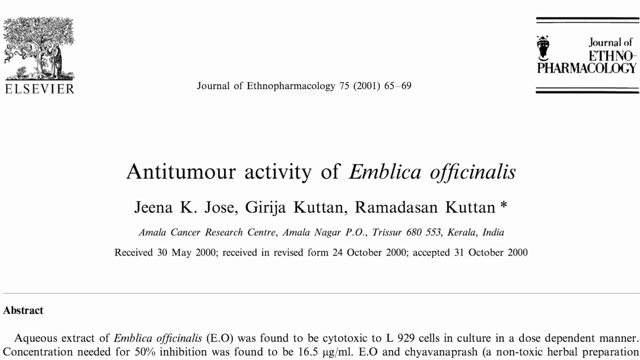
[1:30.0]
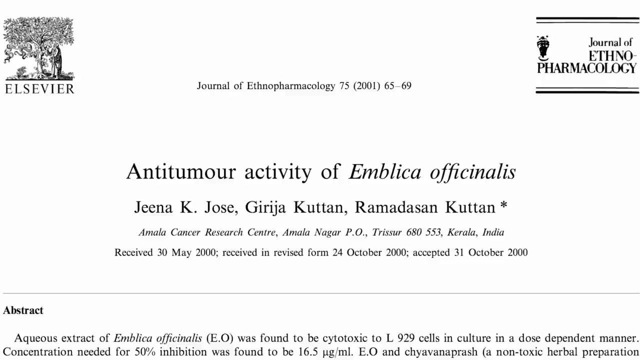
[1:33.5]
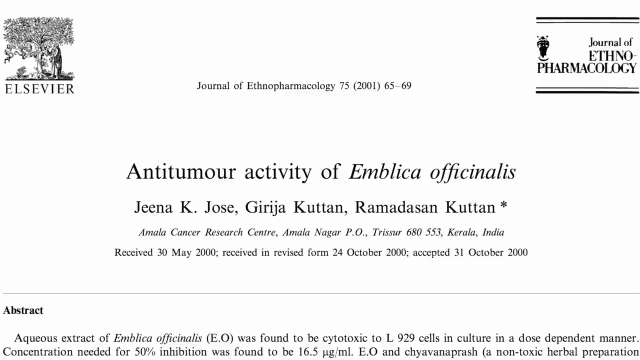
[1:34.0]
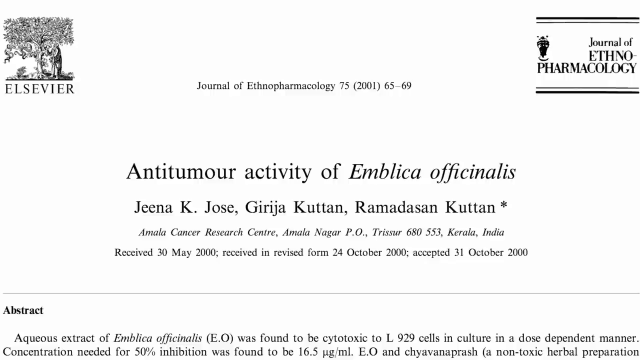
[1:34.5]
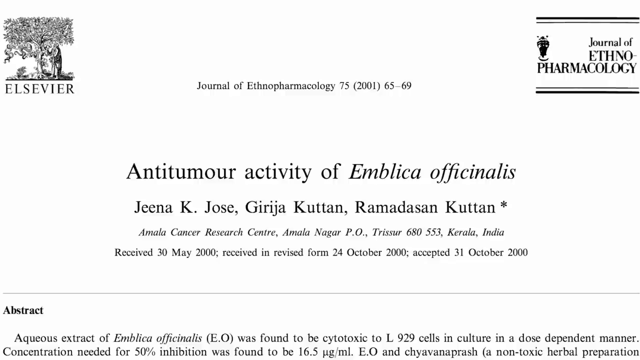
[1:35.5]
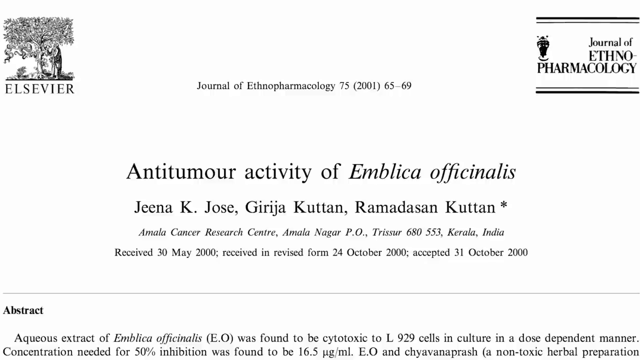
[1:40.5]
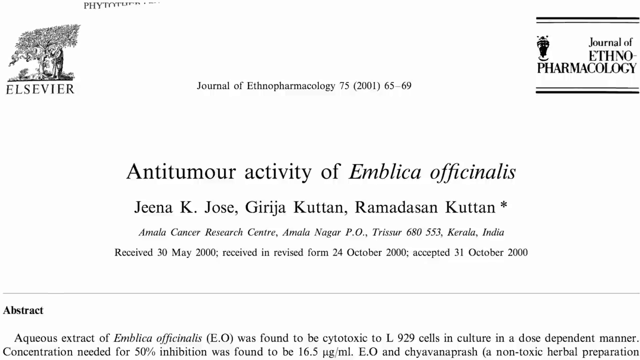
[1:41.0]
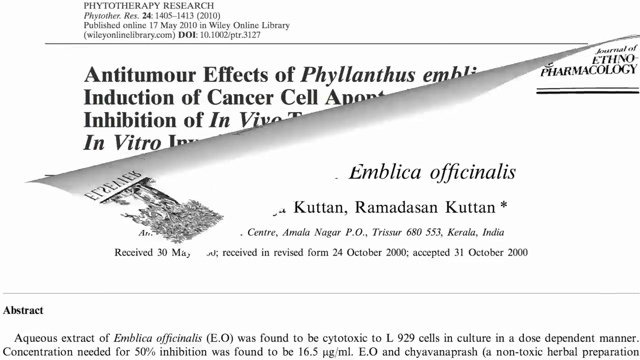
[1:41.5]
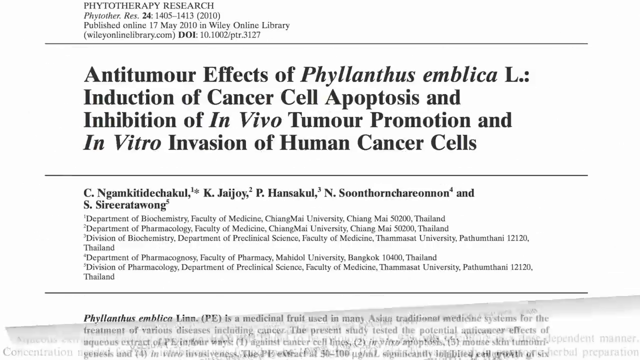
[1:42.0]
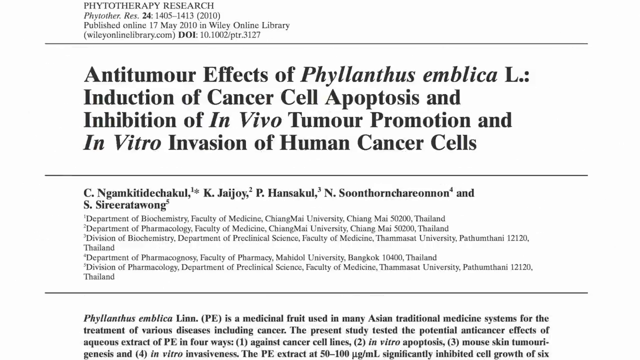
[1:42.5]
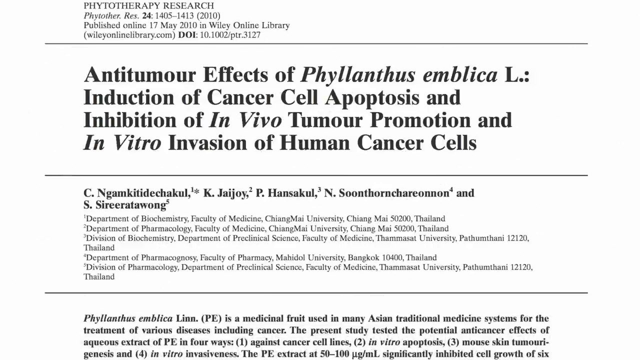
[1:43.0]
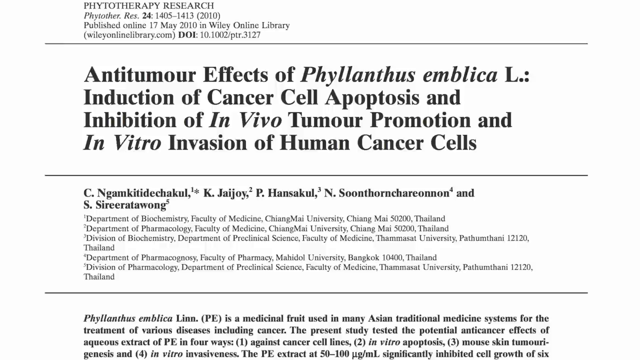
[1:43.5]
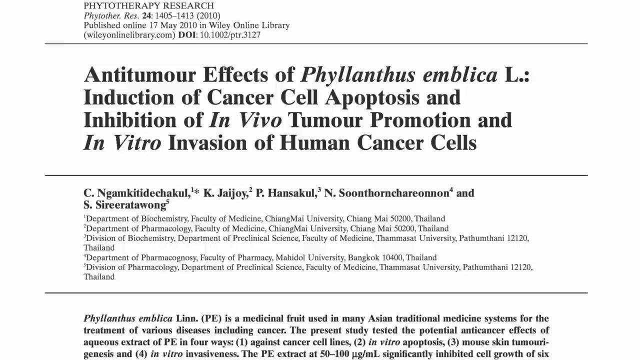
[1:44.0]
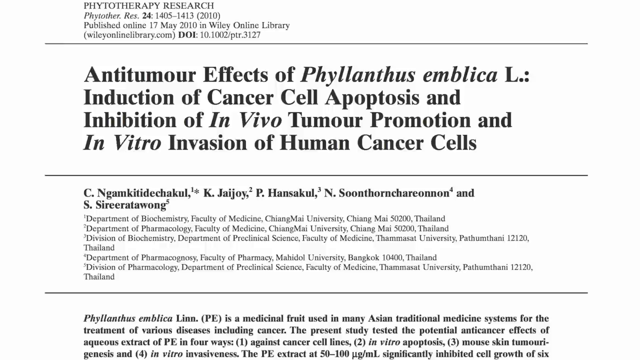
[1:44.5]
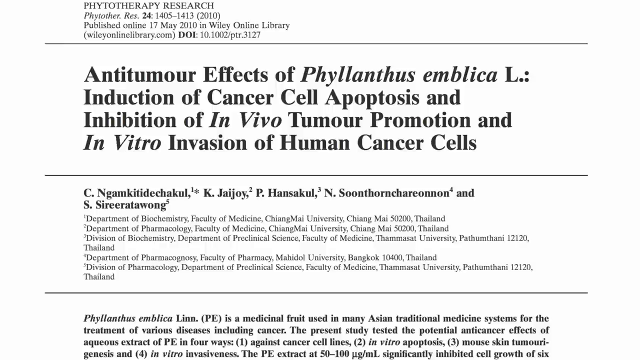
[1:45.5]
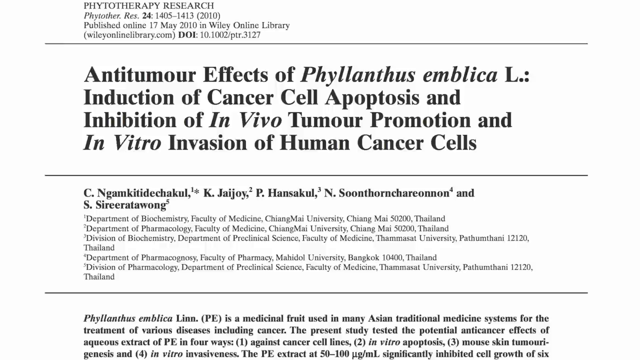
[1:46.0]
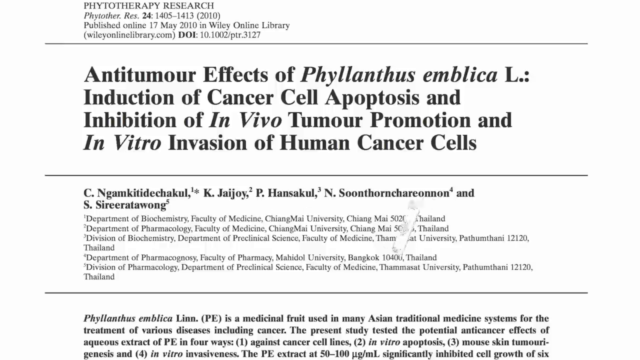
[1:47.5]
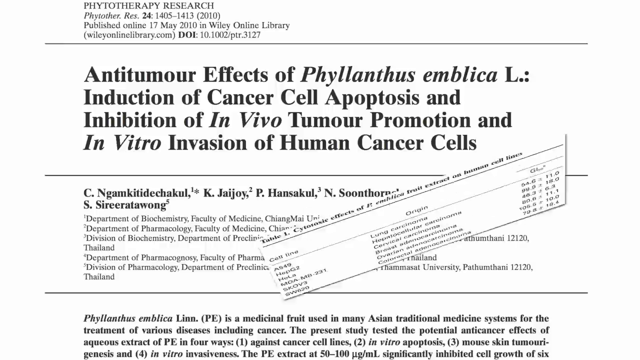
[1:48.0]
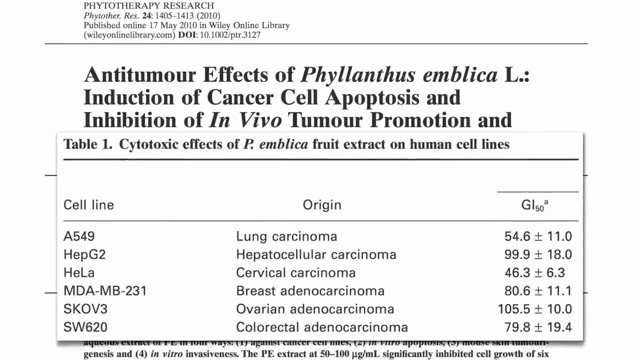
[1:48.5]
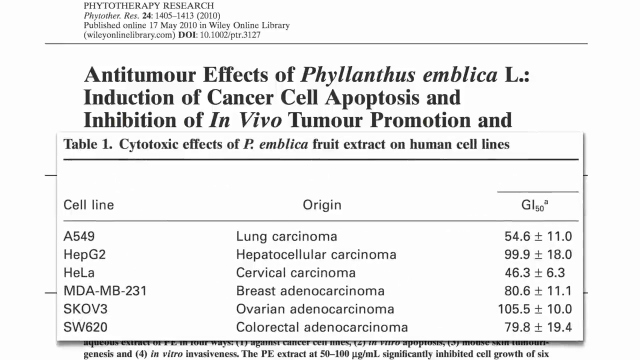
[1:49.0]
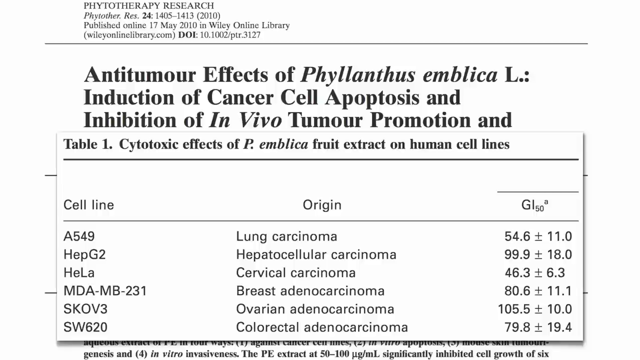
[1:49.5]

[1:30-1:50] What looks like an article from the Journal of Ethnopharmacology is titled "Antitumor Activity of Emblica Officinalis", with the authors' names underneath, their location, the dates the article was received, revised and accepted, and the abstract below. Then another article appears, titled "Antitumor Effects of Phyllanthus Emblica L, Induction of Cancer Cell Apoptosis and Inhibition of In Vivo Tumor Promotion and In Vitro Invasion". Small text at the top shows it is from Phytotherapy Research, with some publication date information and the website. Under the title are the authors' names and their departments and universities, and beneath that the article begins. A large rectangular box pops up at the top of the screen reading "Table 1, Cytotoxic Effects of P.emblica Fruit Extract on Human Cell Lines". Below it is a small chart with three headings, "Cell Lines", "Origin" and "GI50" with a small superscript a, then a skinny separator line and different items listed underneath.